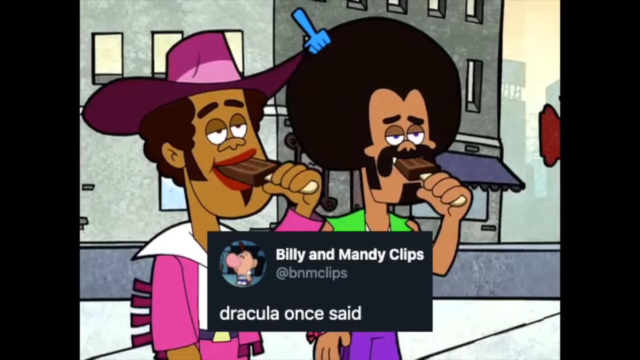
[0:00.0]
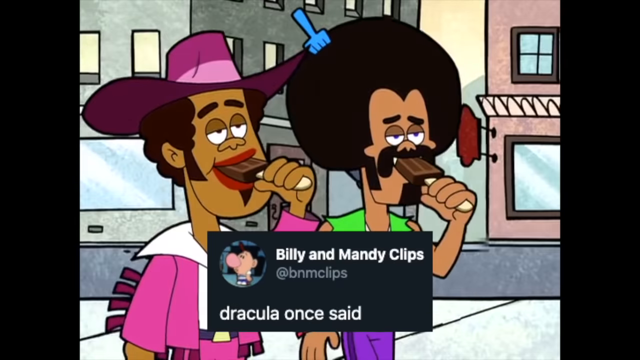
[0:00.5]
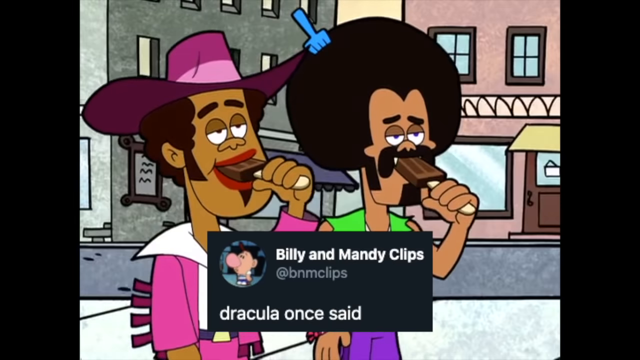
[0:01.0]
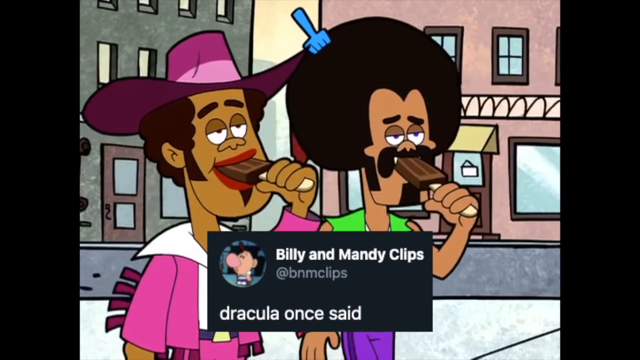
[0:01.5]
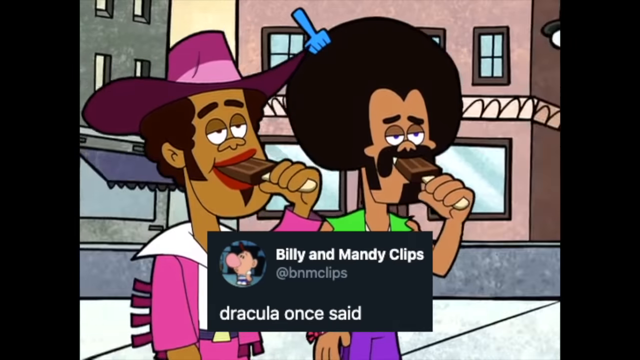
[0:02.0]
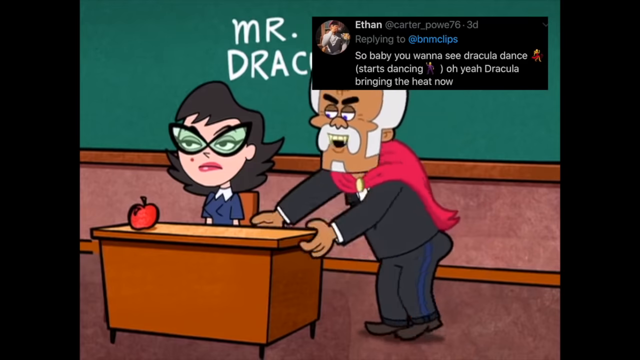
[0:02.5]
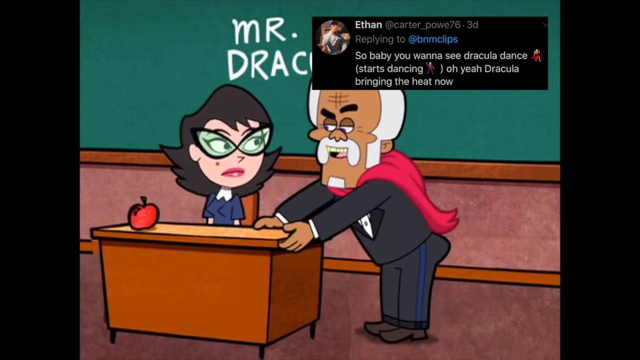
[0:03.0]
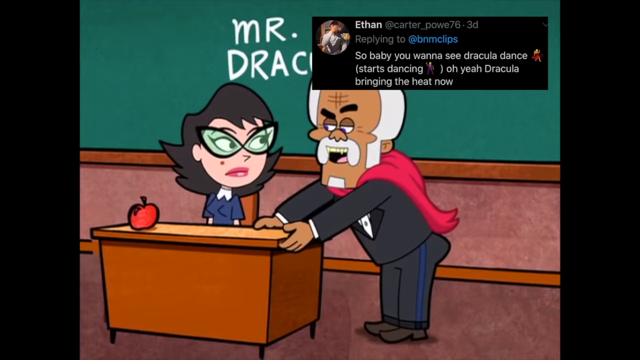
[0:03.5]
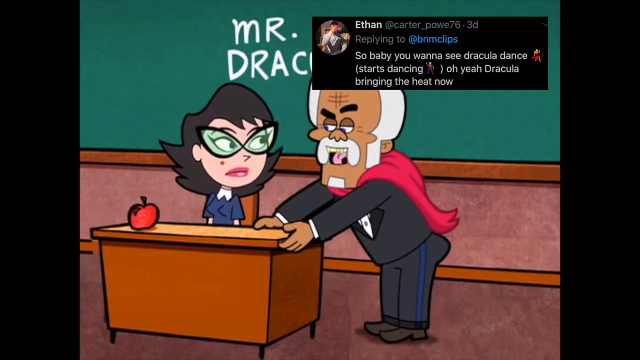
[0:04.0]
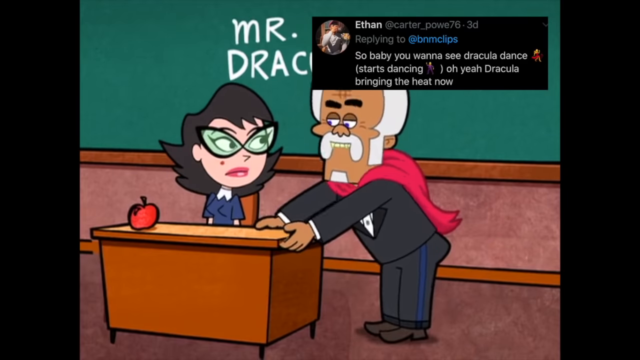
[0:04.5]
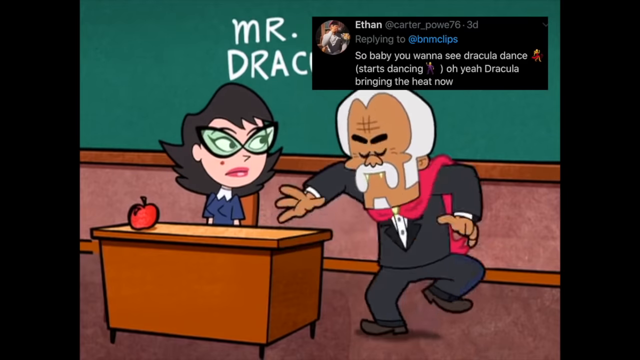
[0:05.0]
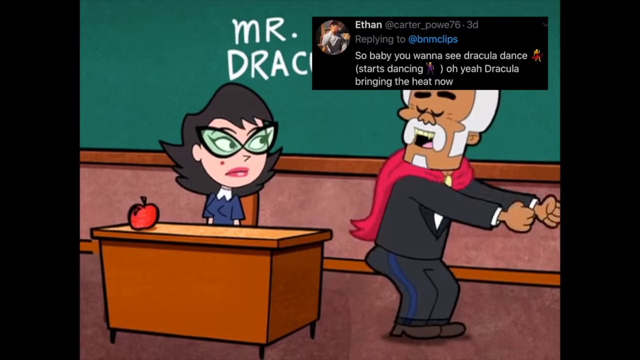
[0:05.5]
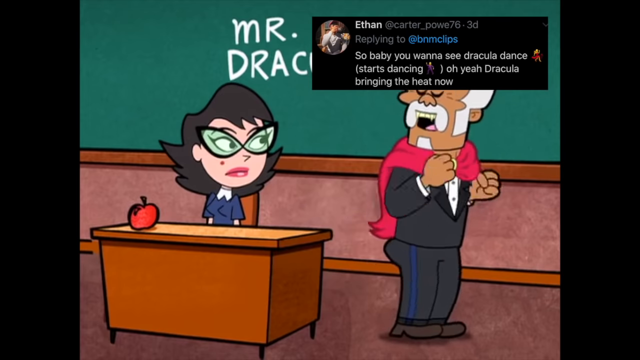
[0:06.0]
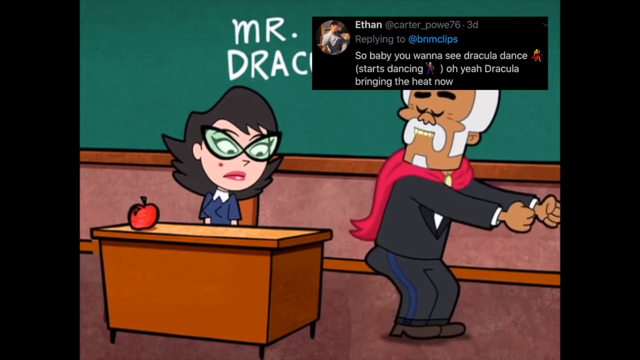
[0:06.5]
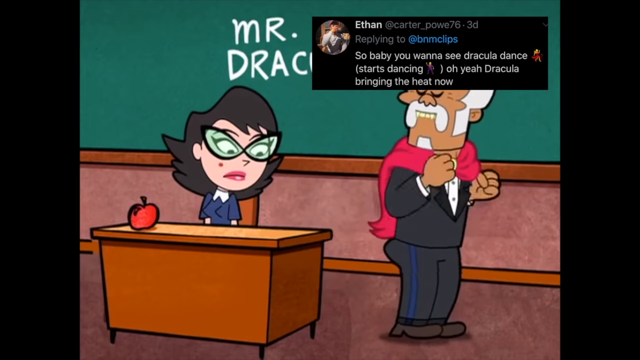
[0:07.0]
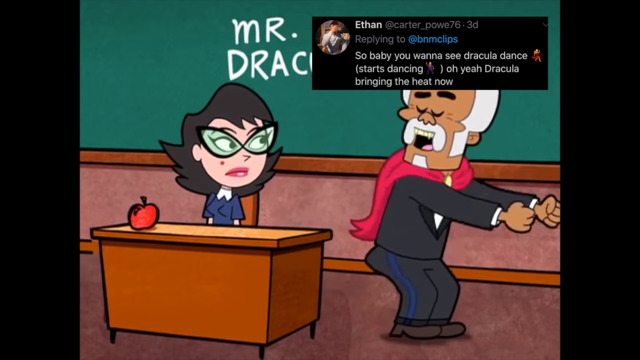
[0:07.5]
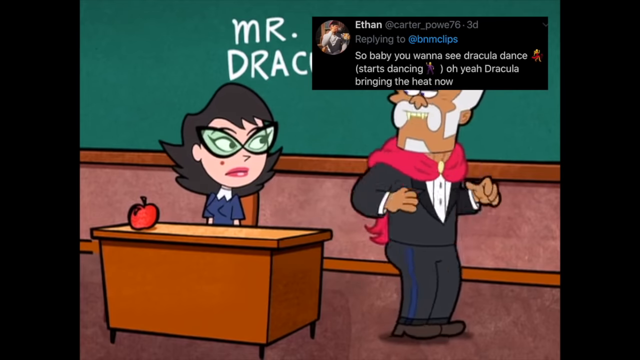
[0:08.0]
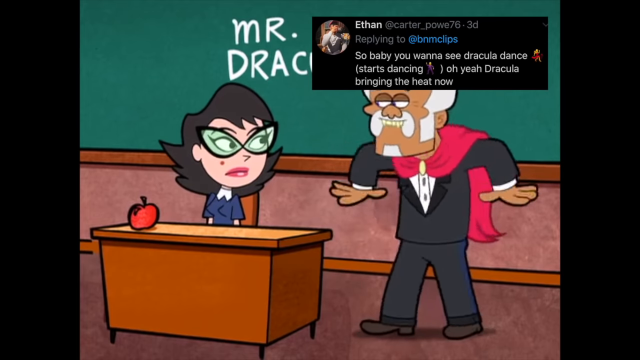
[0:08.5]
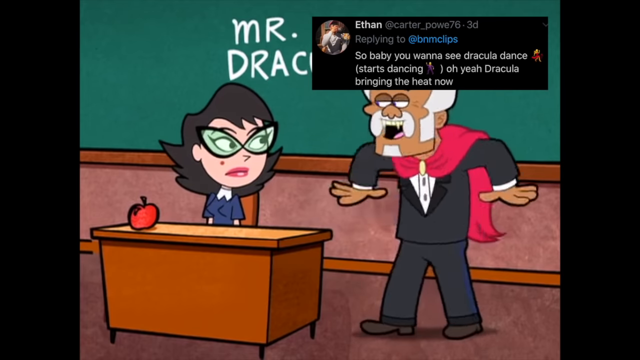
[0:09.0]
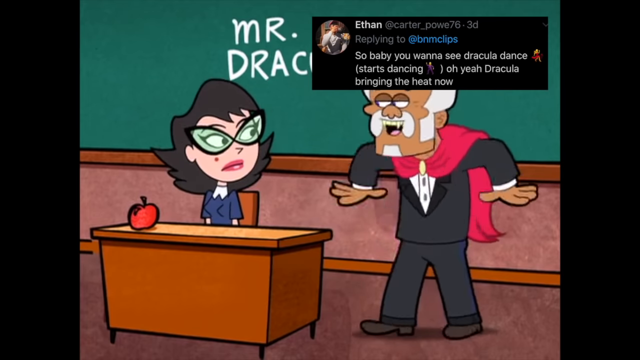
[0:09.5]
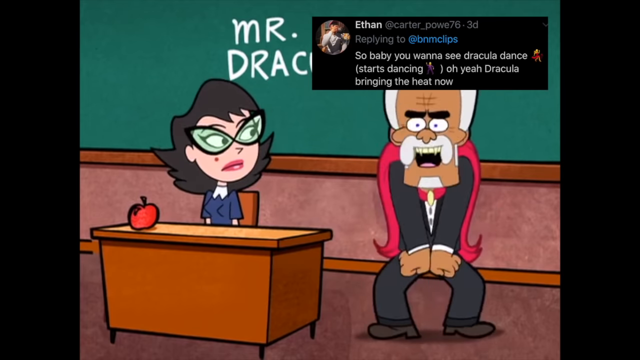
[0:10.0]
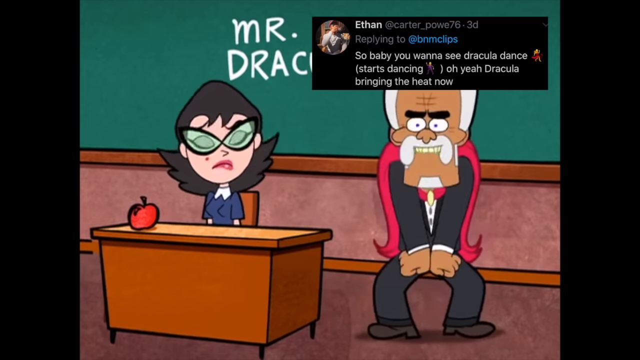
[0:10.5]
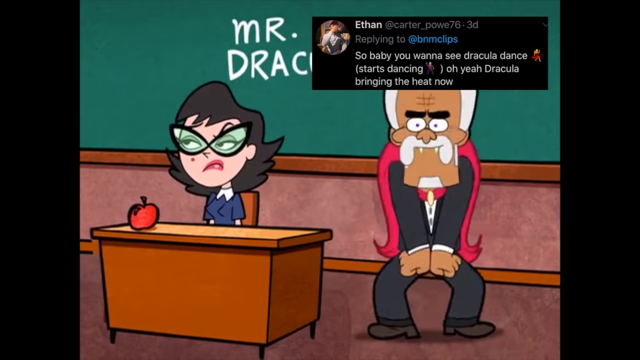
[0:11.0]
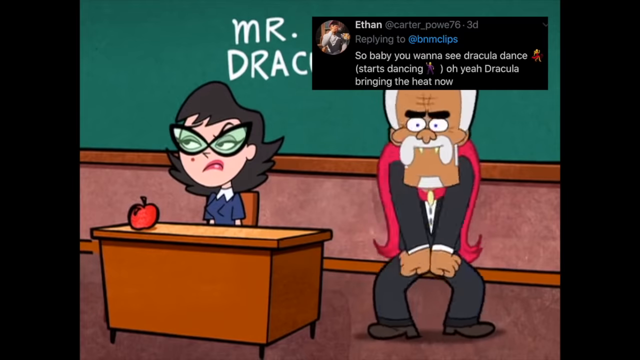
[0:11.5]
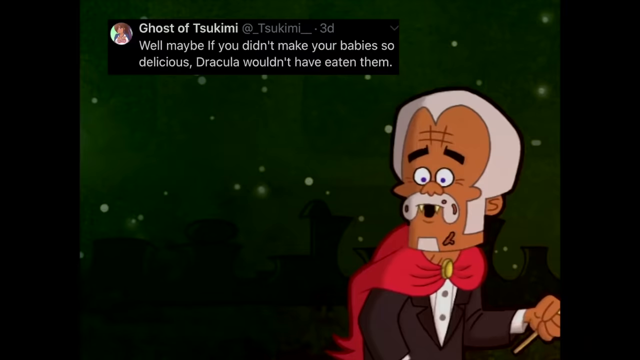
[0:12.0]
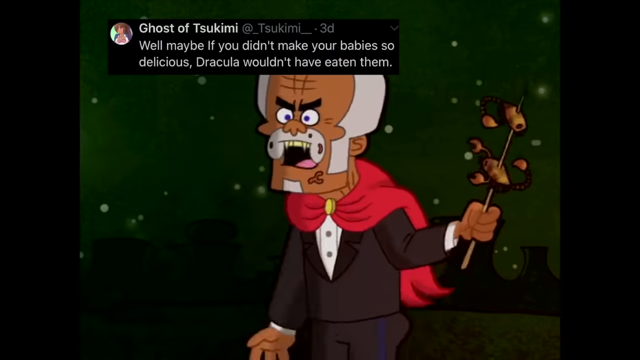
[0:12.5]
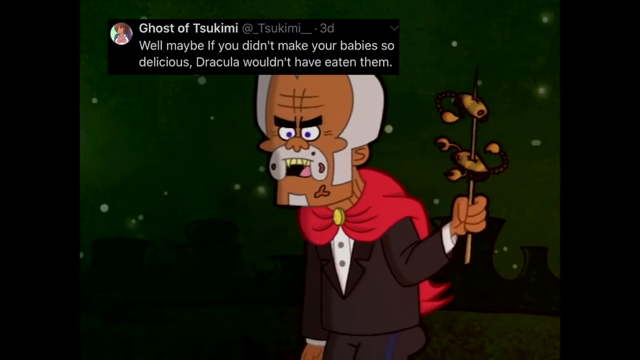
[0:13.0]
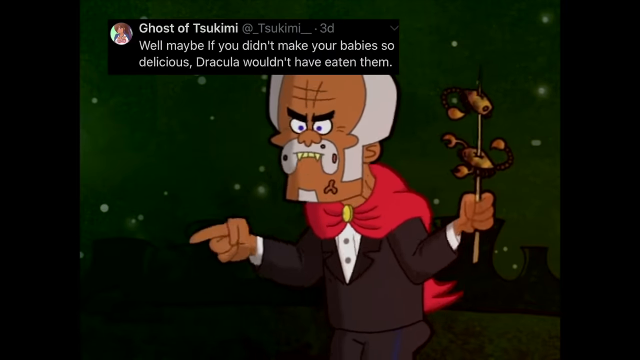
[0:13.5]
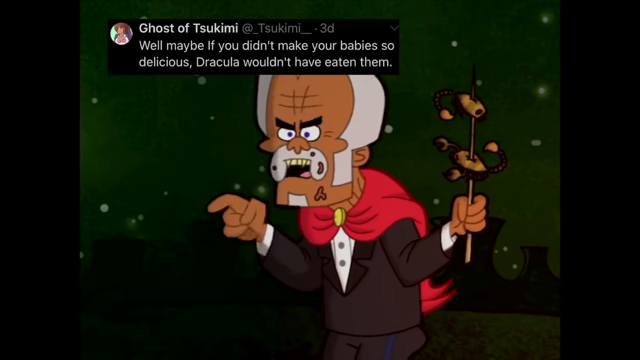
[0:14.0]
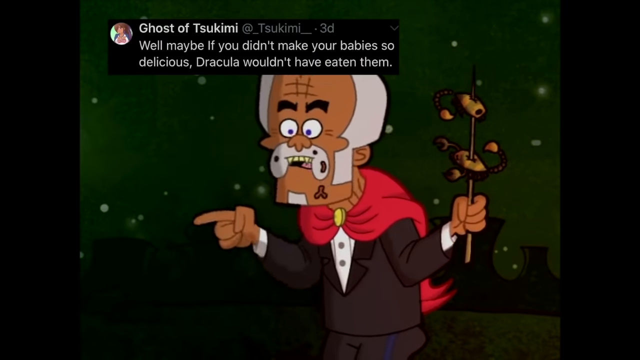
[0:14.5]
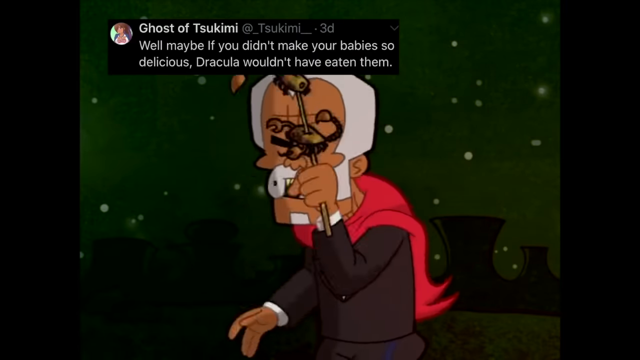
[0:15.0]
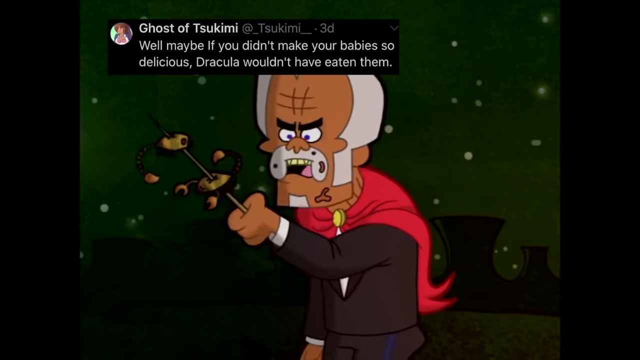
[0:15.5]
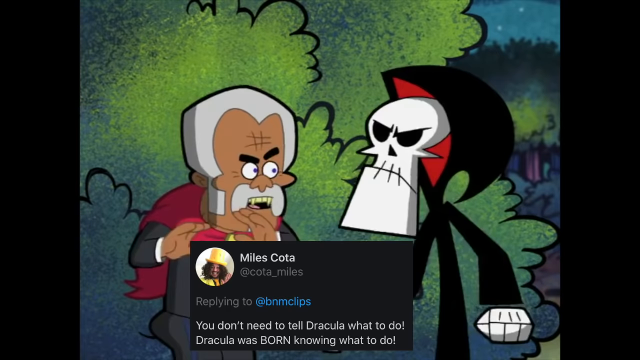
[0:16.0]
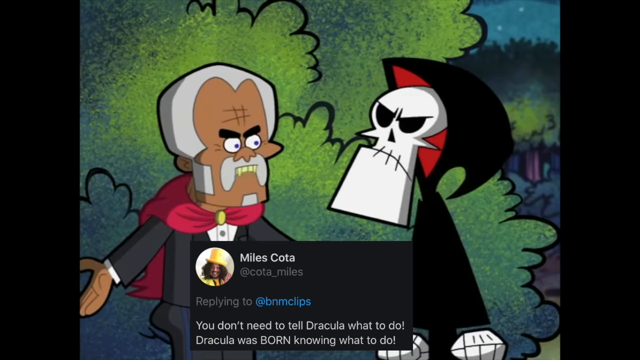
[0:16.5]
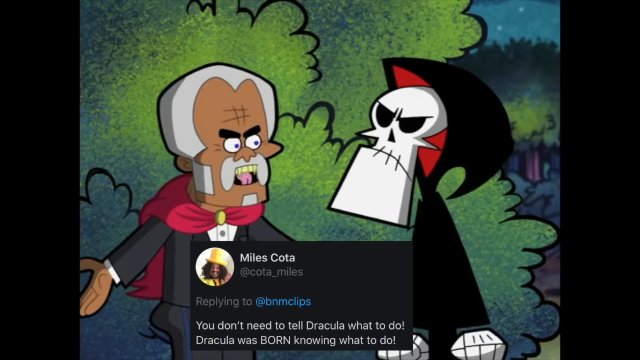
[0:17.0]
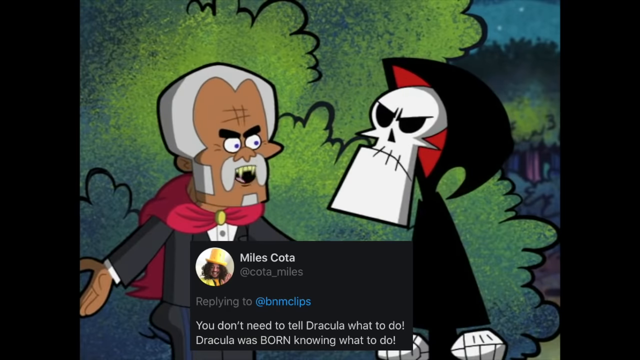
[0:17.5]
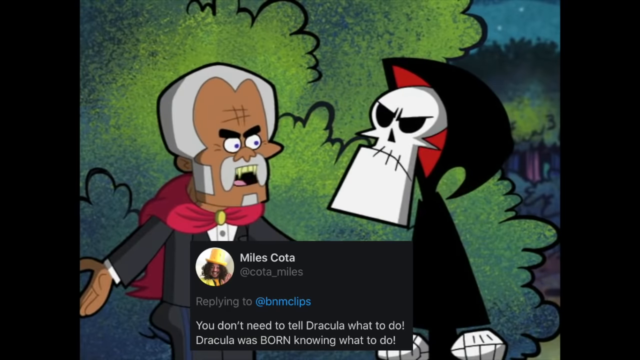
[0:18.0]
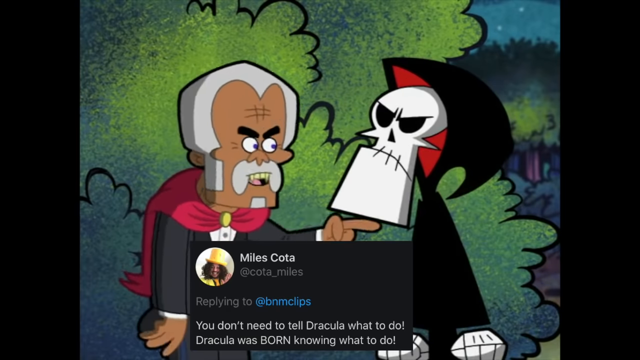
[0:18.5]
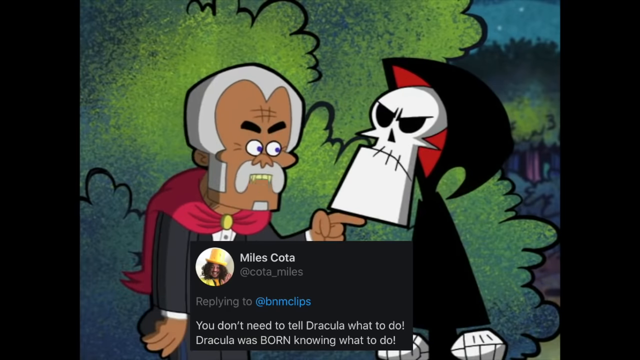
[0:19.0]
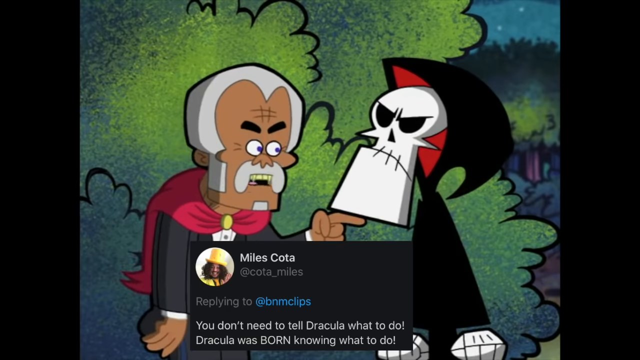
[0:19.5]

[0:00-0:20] Two men walk down the road in a brick city environment, both eating chocolate fudge bars. They look to be grown men, probably maybe in their lower 40s, and both look African-American. One has an afro, a full mustache and a goatee; the other wears a big pink and purple hat and has pretty big hair himself. One wears a pink and white jacket with fringe all around it, and the other wears green and purple clothes. The scene then switches to a classroom, where a white woman with cat-lens glasses sits at a desk. An older man wearing a tux and a red superhero cape comes up to the desk, leans over on it, looks at the woman and starts talking to her.